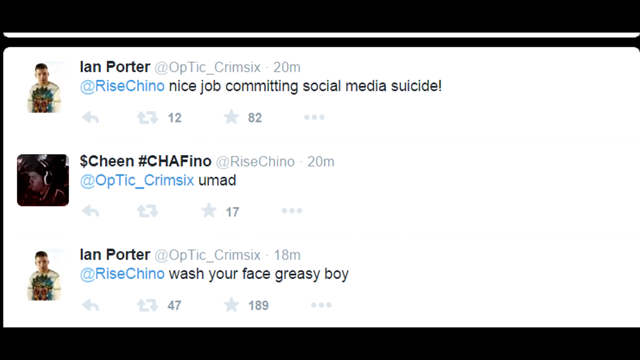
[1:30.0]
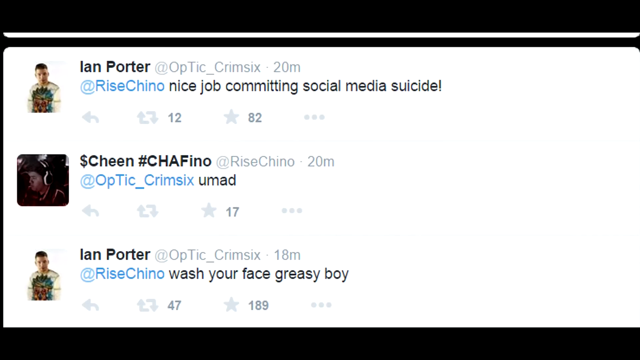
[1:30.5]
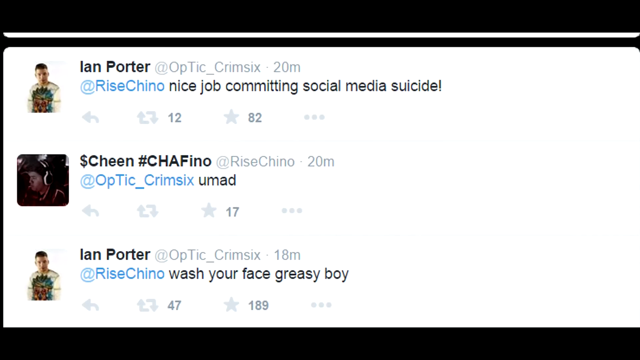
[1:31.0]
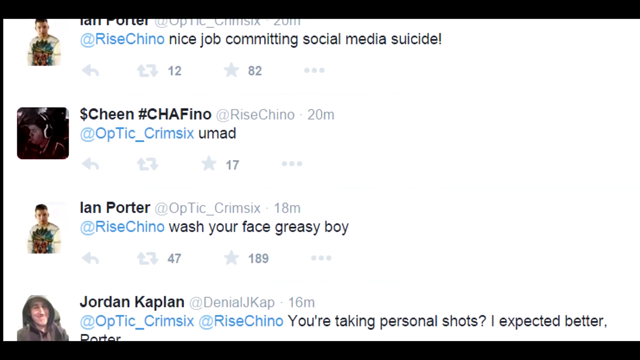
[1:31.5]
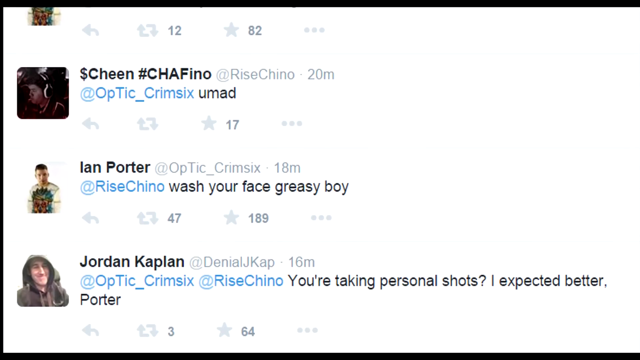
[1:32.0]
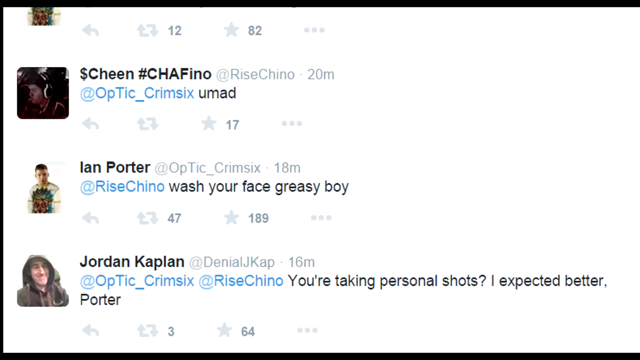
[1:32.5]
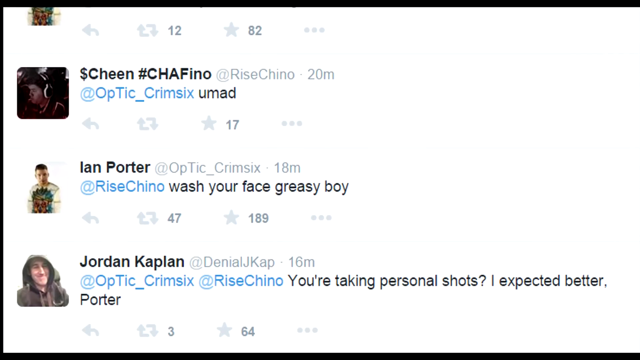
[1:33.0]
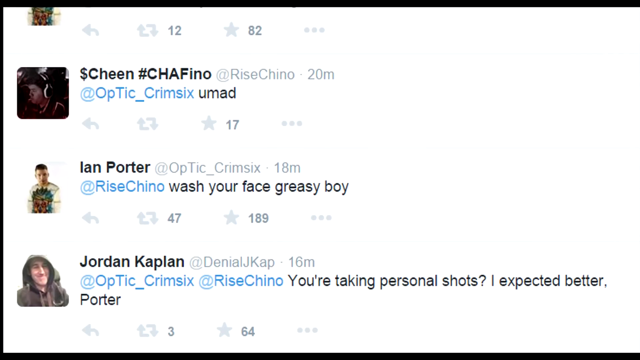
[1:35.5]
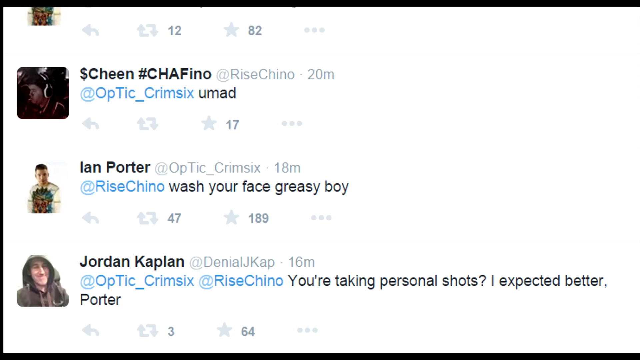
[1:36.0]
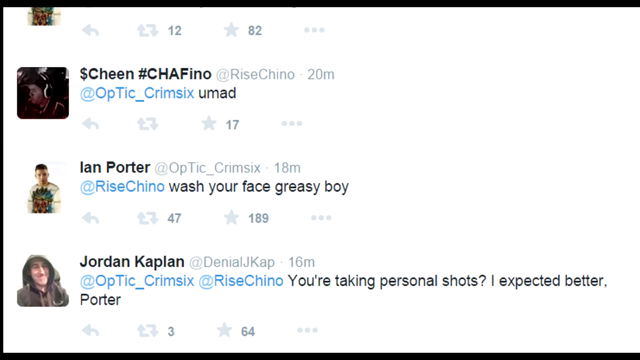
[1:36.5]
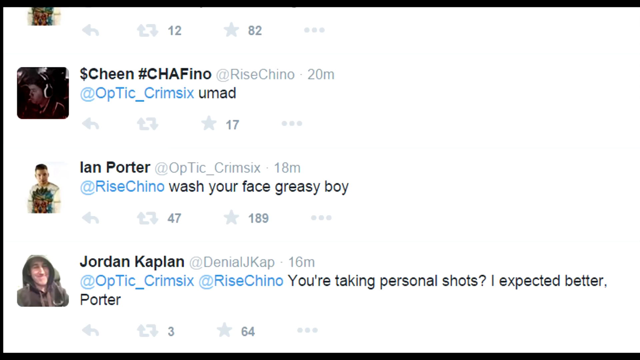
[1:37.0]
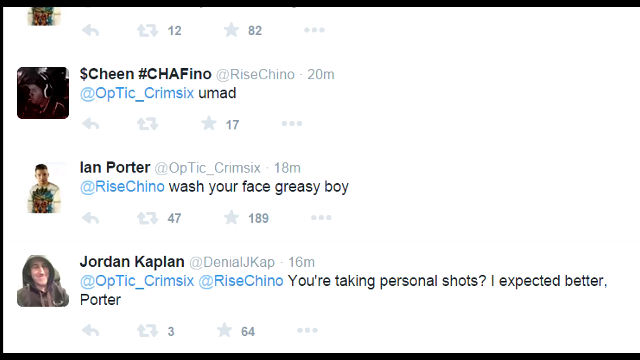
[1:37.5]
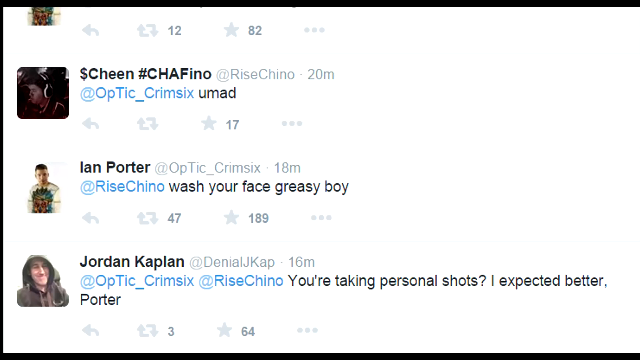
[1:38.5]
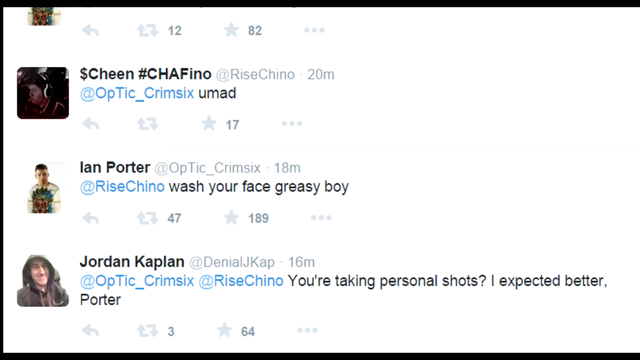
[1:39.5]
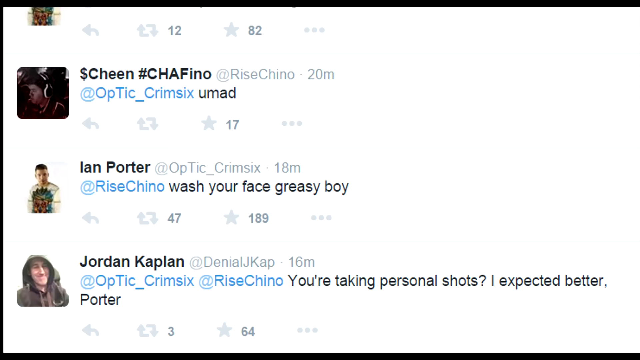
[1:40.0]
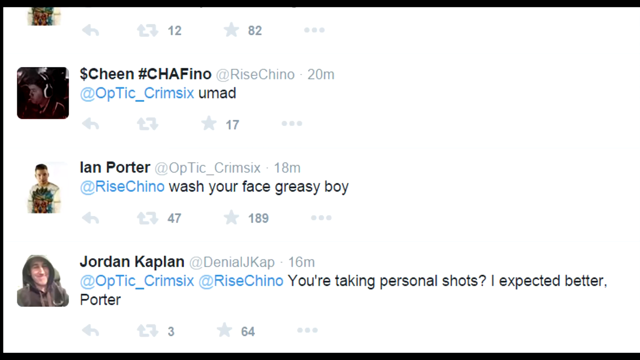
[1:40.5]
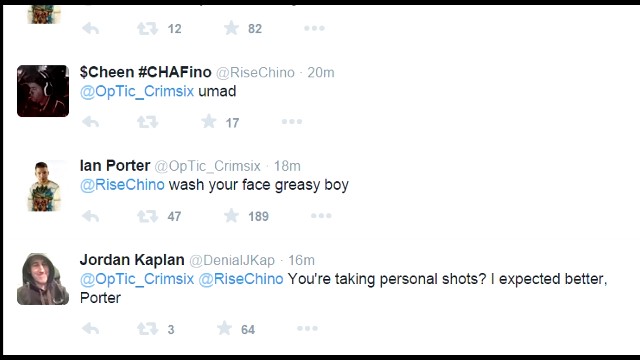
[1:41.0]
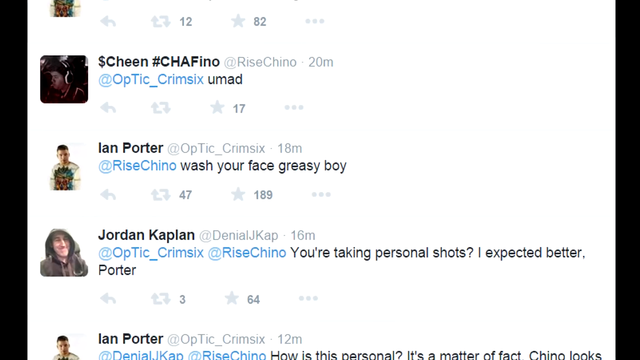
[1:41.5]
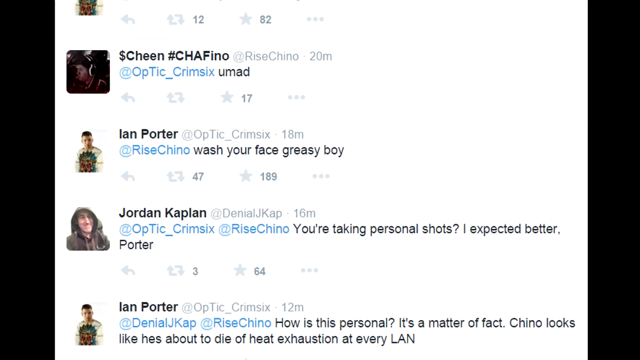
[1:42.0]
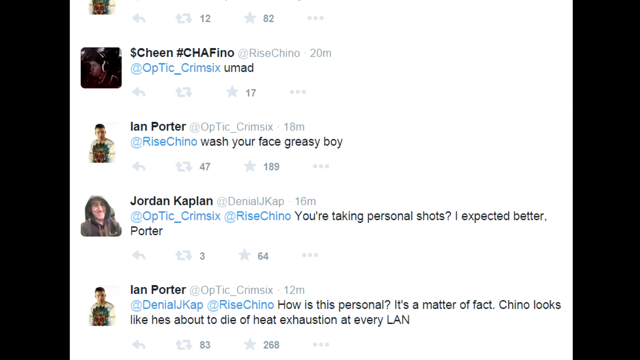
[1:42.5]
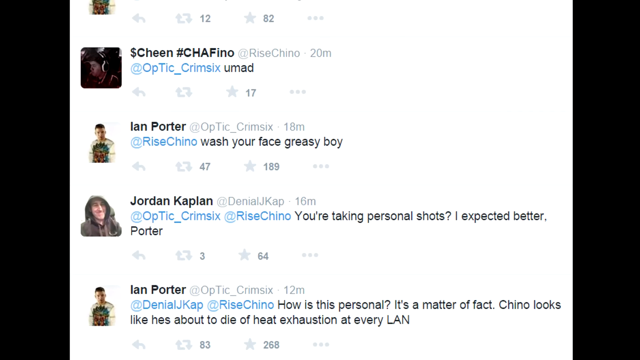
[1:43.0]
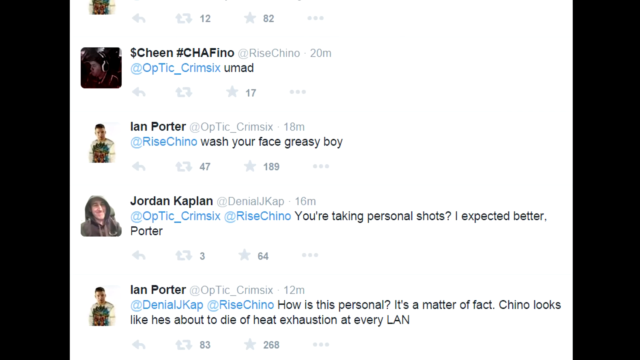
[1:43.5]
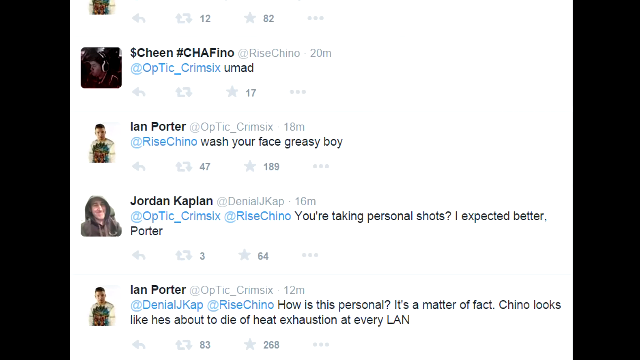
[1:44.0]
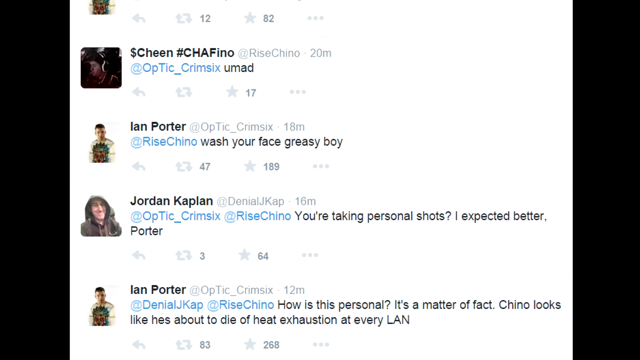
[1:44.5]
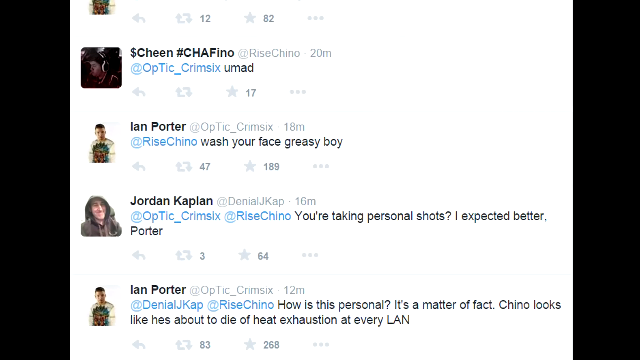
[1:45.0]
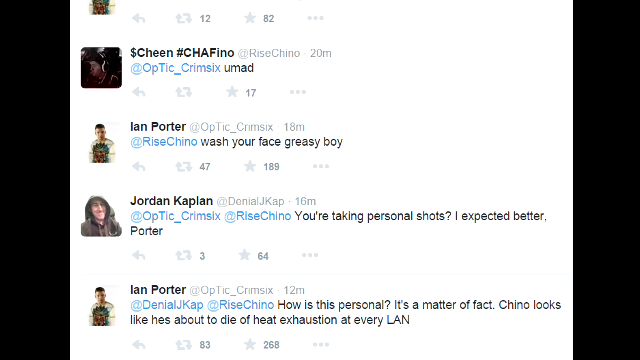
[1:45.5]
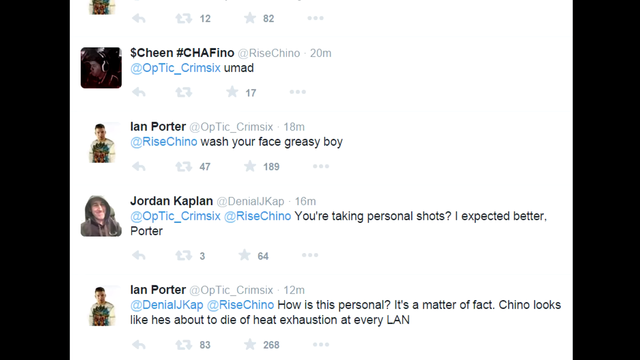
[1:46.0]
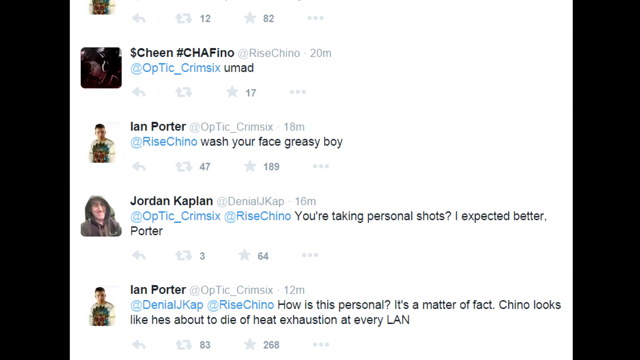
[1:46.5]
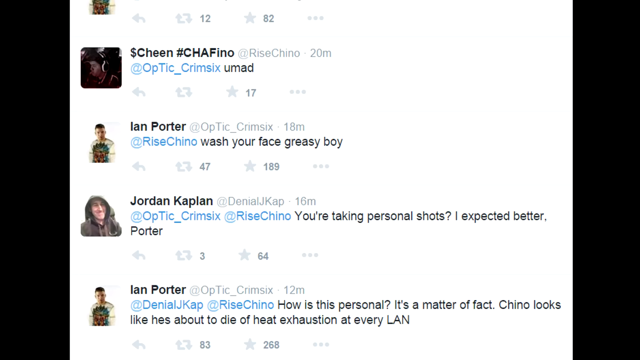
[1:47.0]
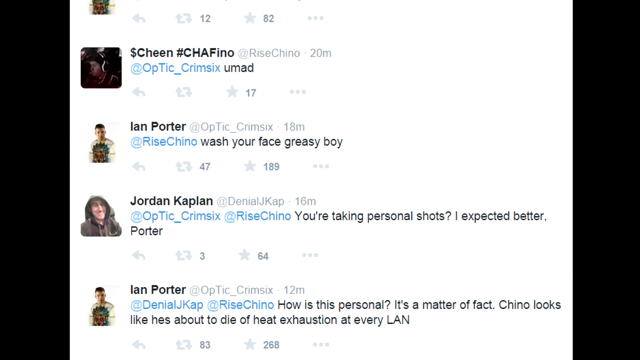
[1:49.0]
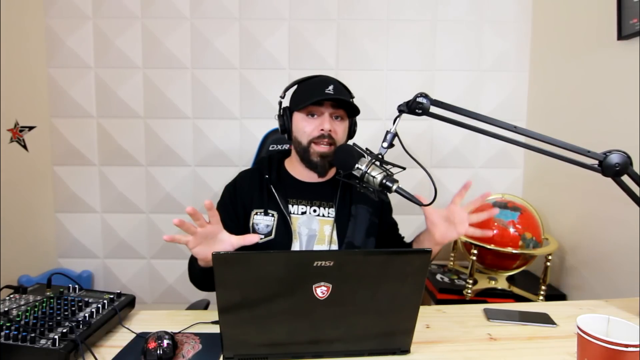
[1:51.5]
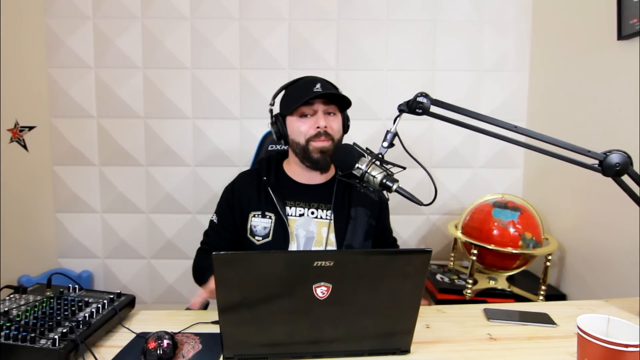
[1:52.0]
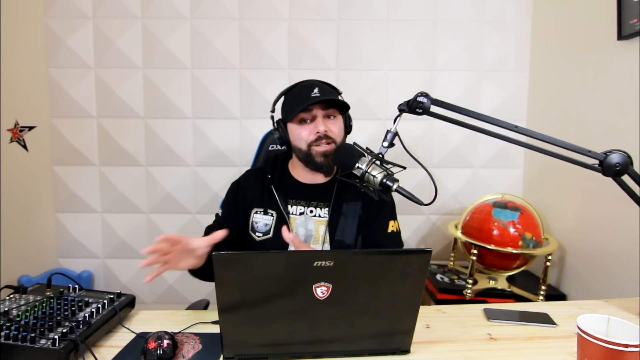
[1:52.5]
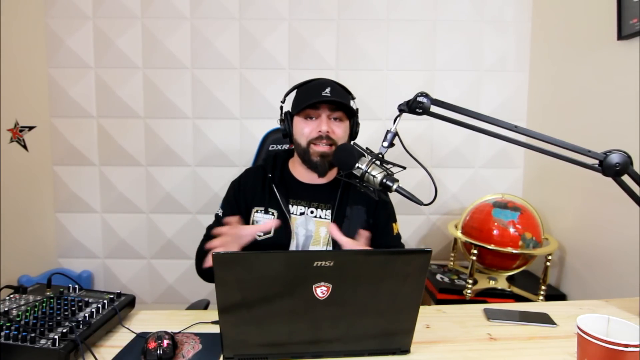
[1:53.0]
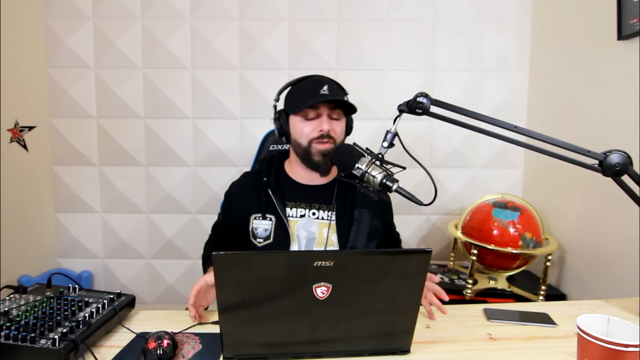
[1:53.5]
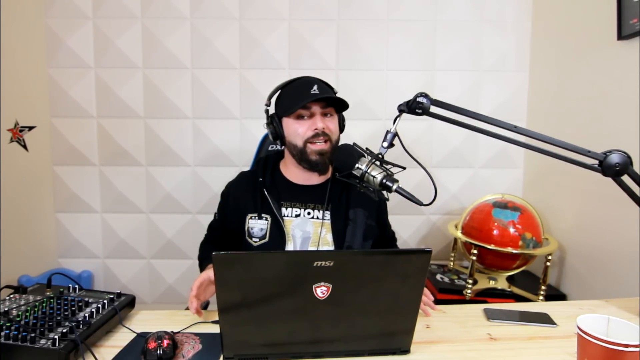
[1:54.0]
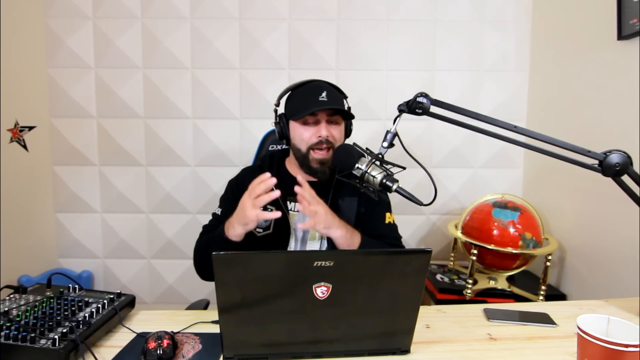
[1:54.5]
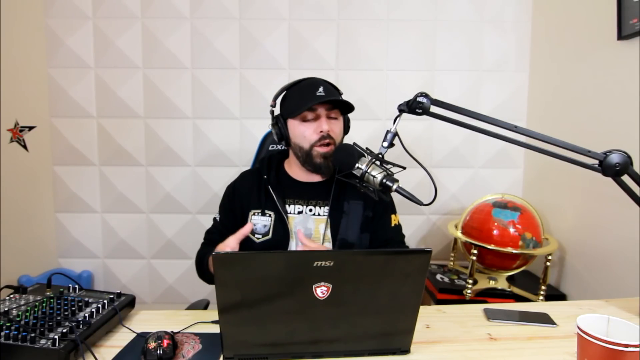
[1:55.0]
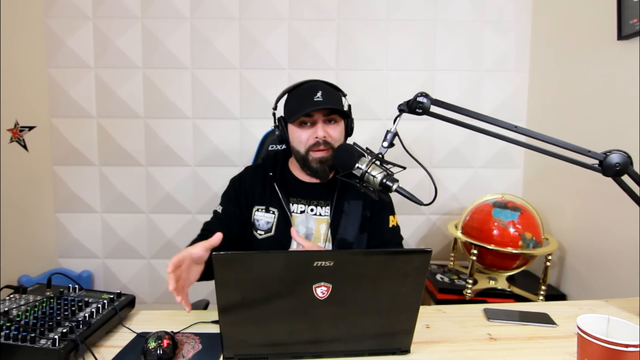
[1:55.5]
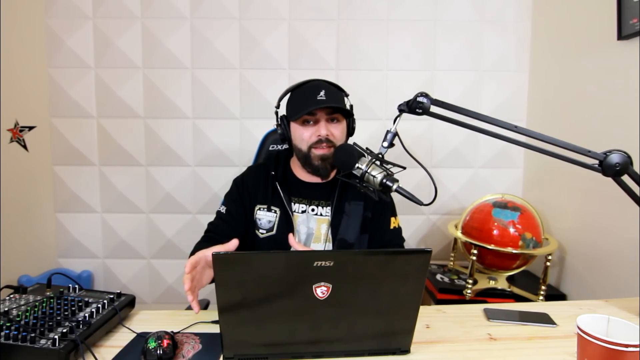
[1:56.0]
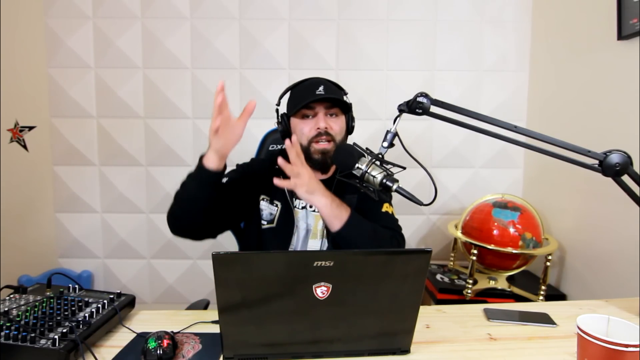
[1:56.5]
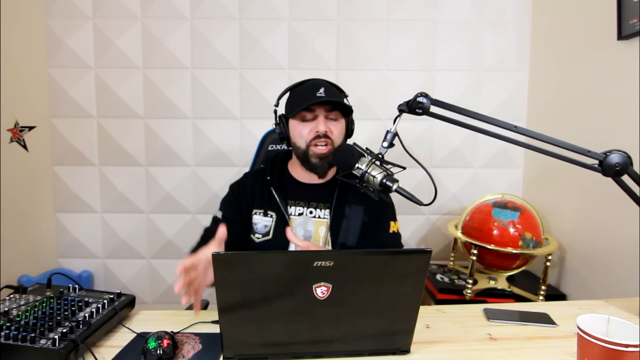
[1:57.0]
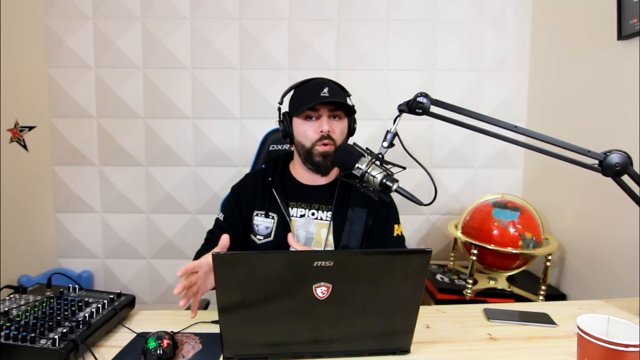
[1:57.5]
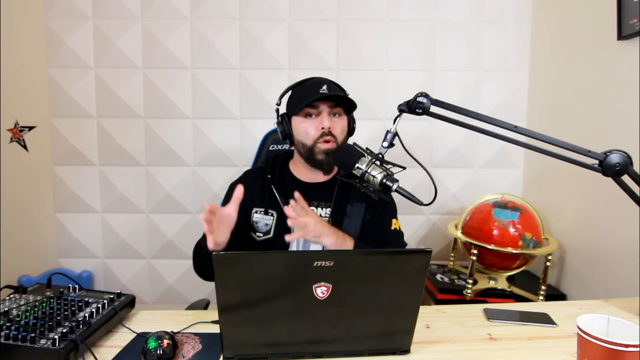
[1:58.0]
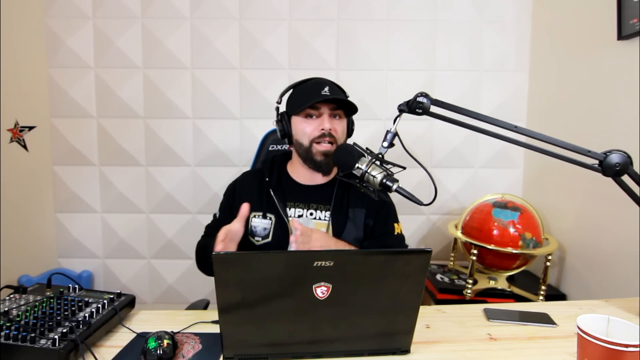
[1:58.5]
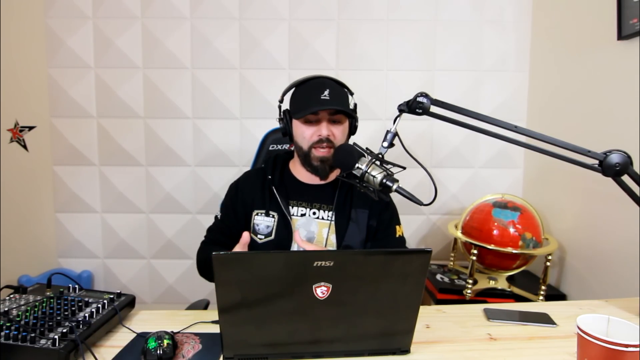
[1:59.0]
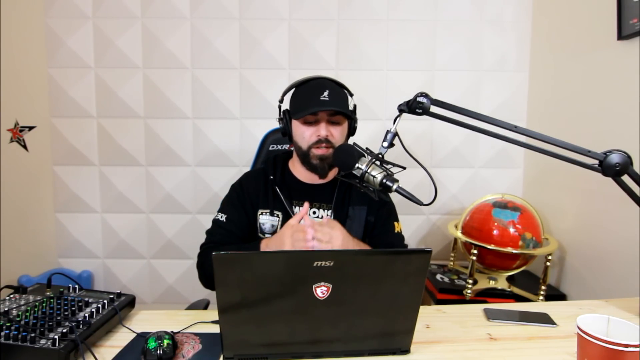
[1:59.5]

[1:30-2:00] Another YouTube comment appears, from a man whose profile picture shows him with a hood up over his head. His name is "jordan caplin @denial j cap", and it was posted 16 minutes ago. Underneath the name it says "@optic crimsic @rise chino", and the comment reads "you're taking personal shots I expected better porter". The number of likes and stars is also shown. The picture then zooms out to the next comment, from Ian Porter: "how is this personal? It's a matter of fact. Chino looks like he's about to die of heat exhaustion at every LAN." The video then returns to the man at the desk talking into his microphone, making very large hand movements as he speaks, with the scenery behind him unchanged.